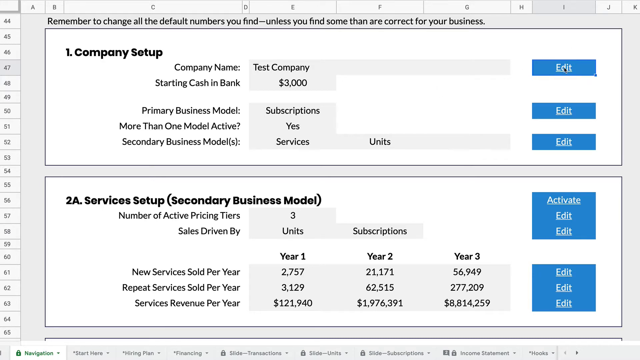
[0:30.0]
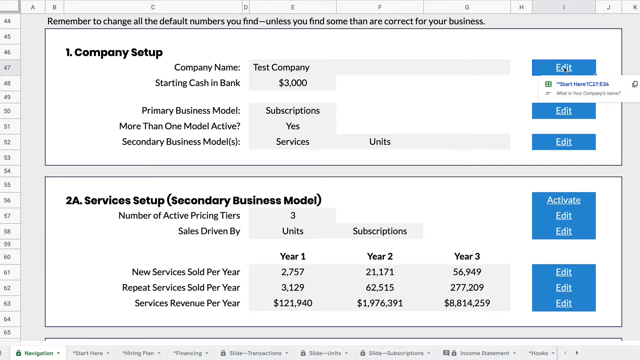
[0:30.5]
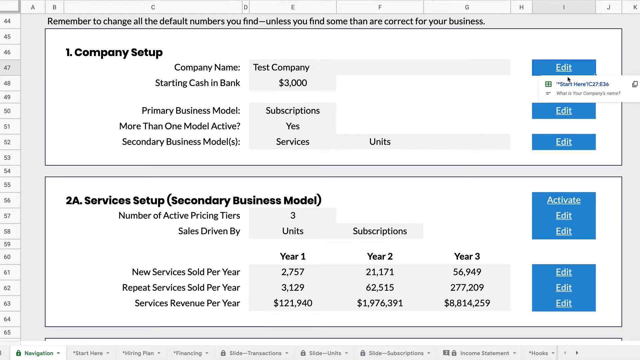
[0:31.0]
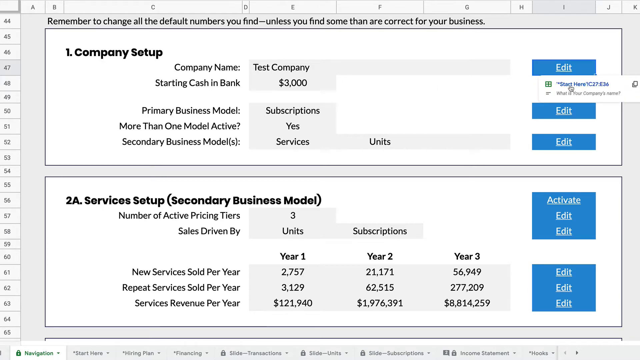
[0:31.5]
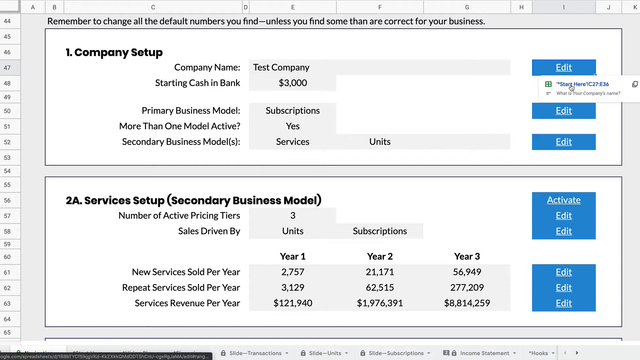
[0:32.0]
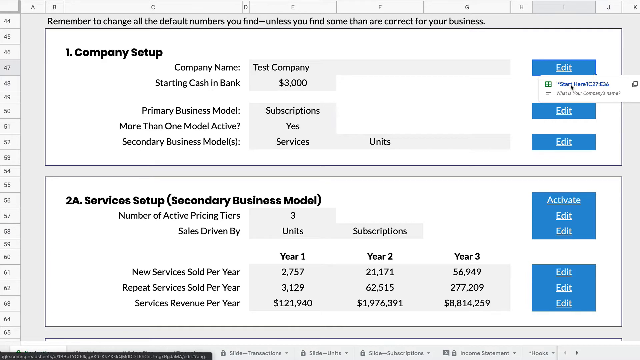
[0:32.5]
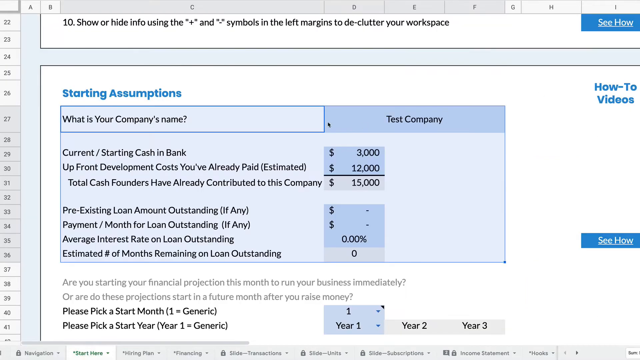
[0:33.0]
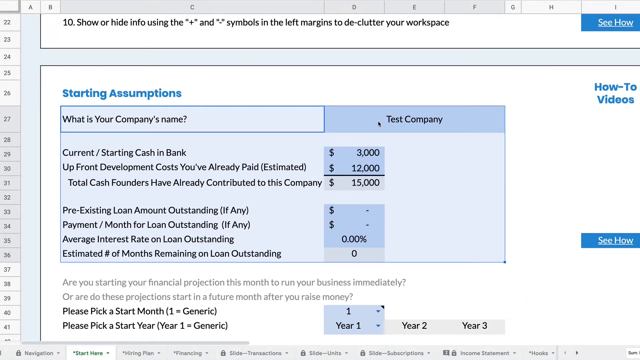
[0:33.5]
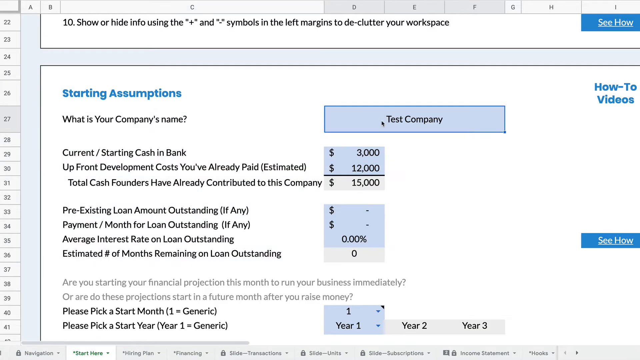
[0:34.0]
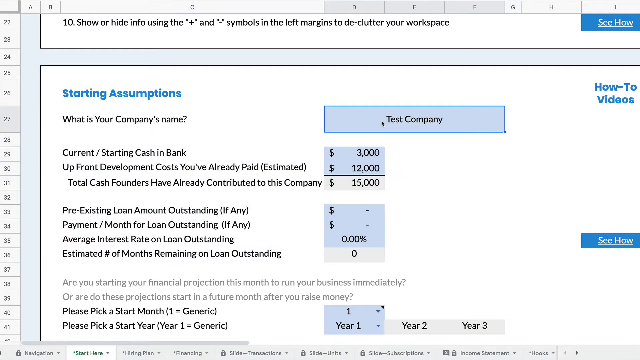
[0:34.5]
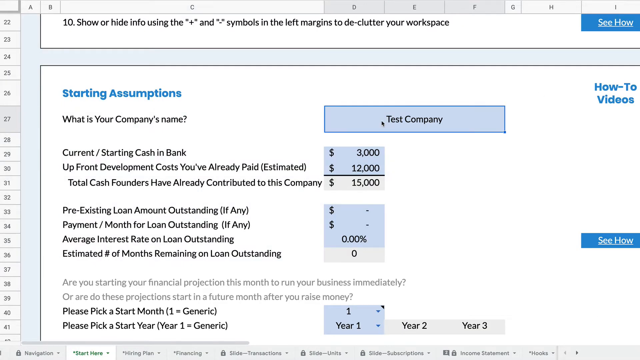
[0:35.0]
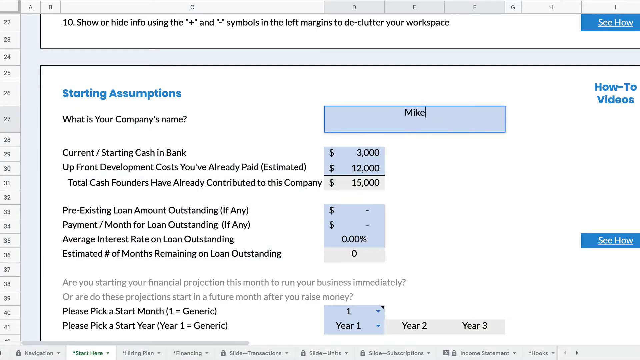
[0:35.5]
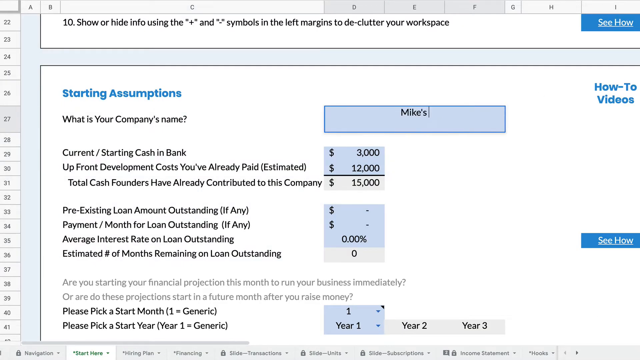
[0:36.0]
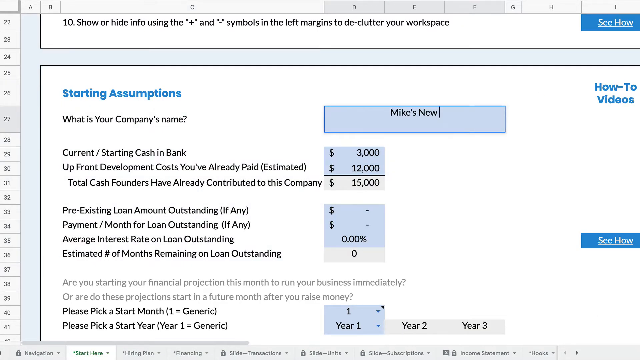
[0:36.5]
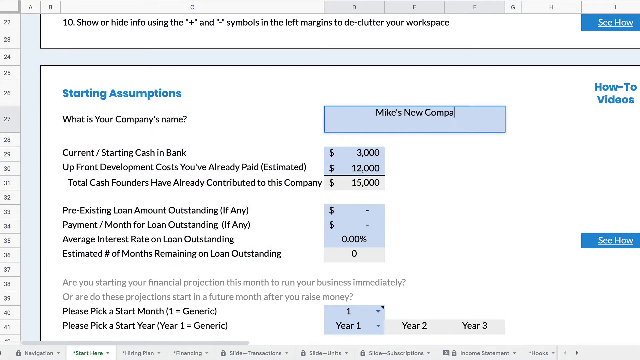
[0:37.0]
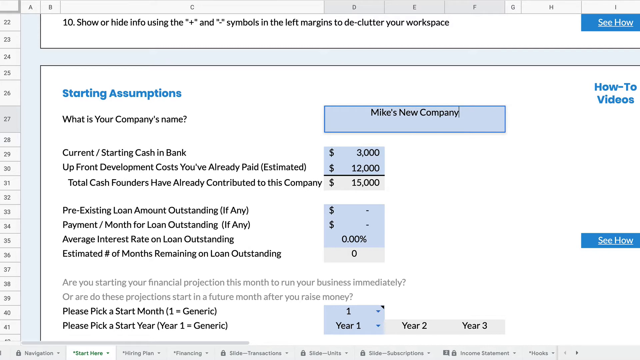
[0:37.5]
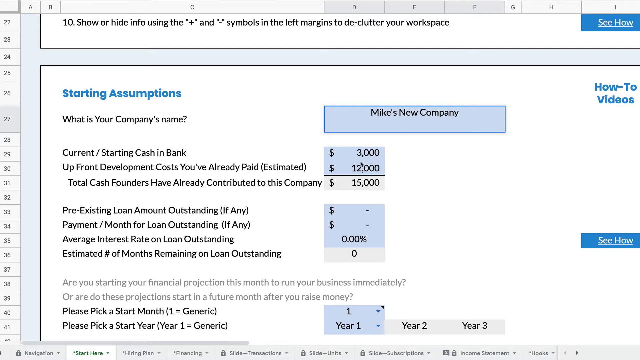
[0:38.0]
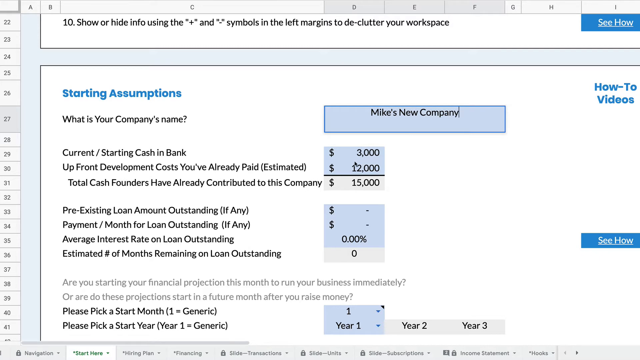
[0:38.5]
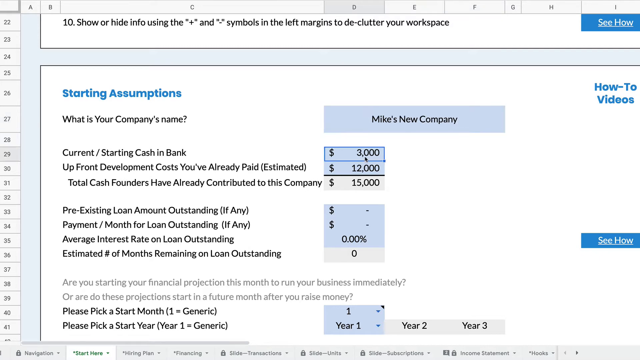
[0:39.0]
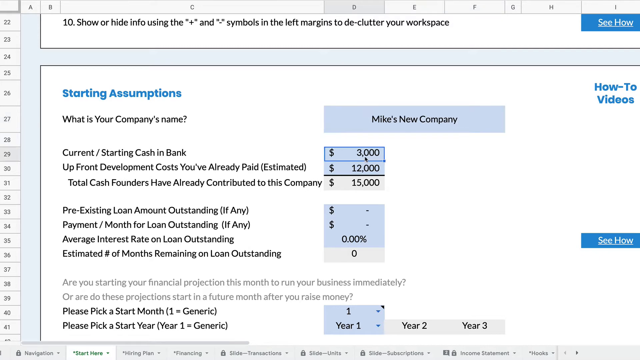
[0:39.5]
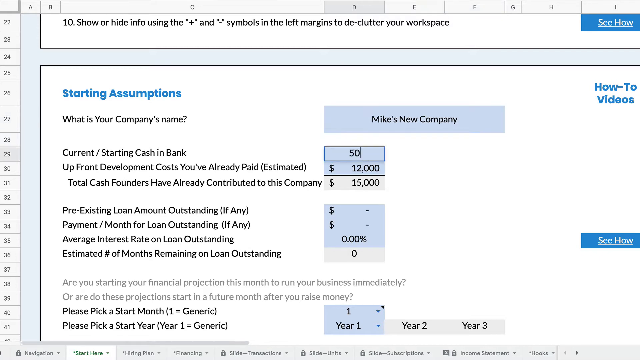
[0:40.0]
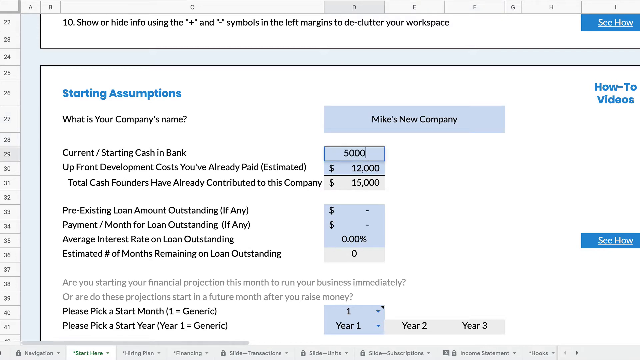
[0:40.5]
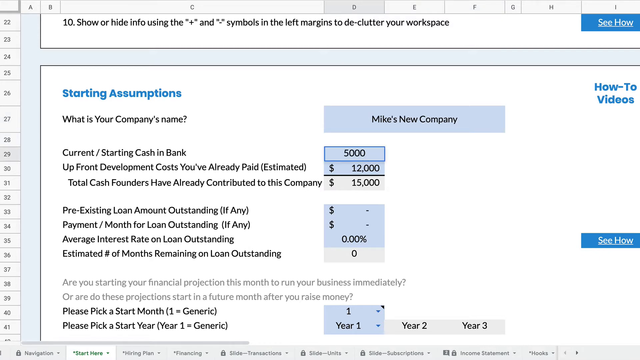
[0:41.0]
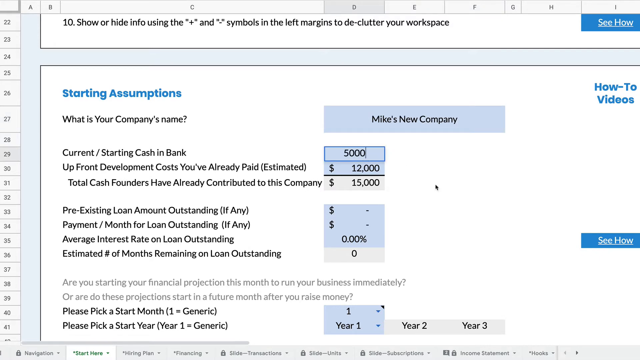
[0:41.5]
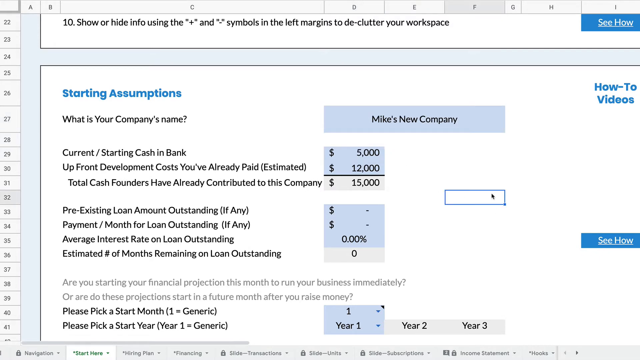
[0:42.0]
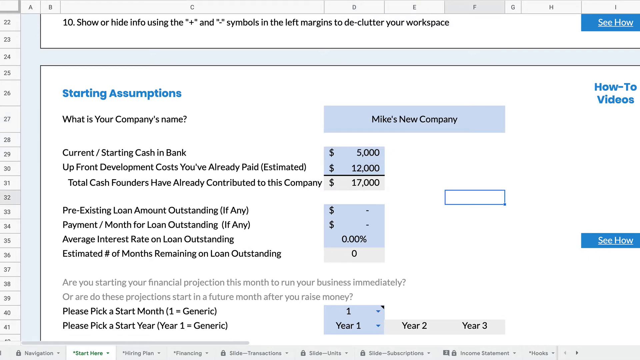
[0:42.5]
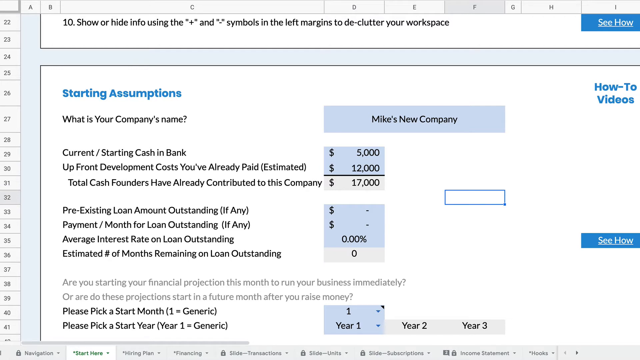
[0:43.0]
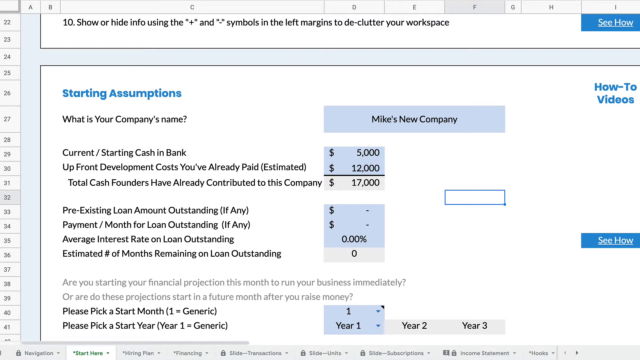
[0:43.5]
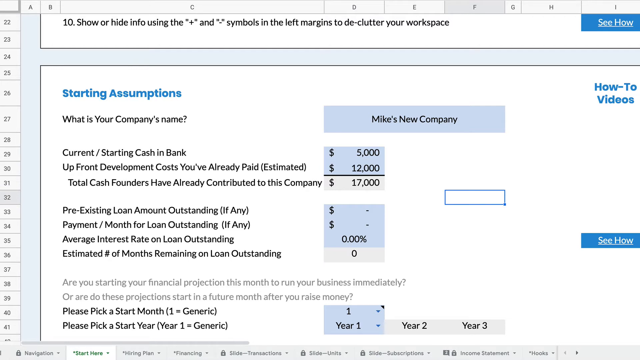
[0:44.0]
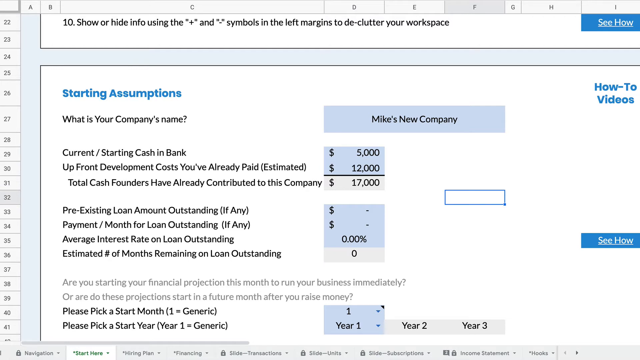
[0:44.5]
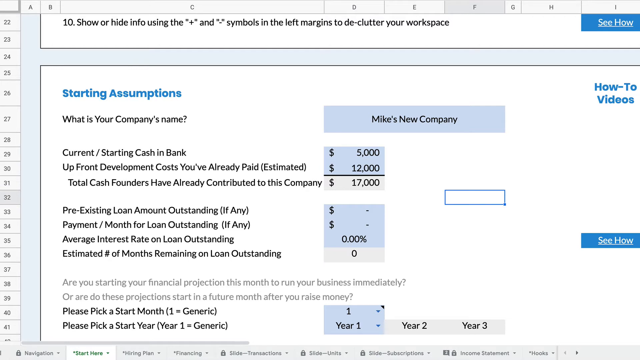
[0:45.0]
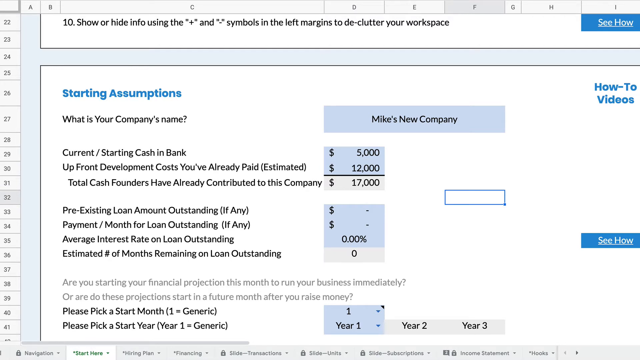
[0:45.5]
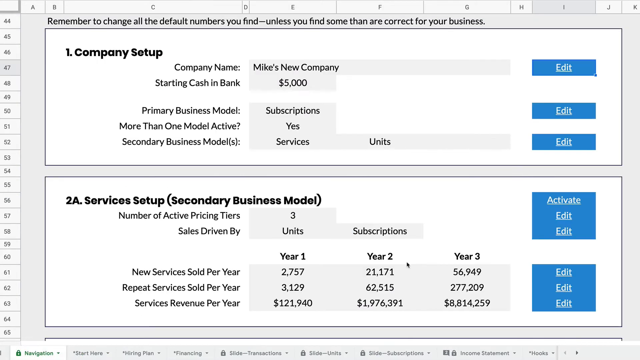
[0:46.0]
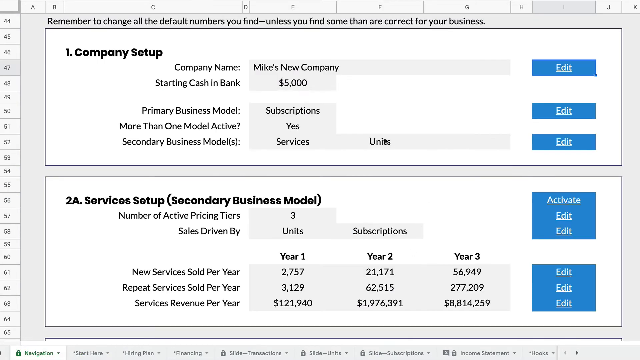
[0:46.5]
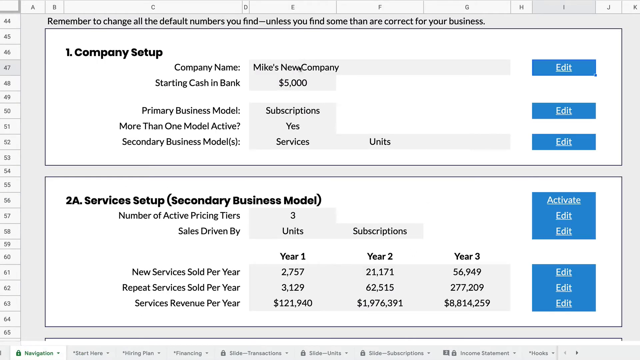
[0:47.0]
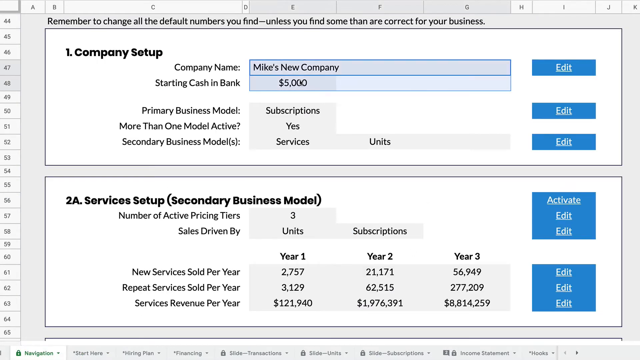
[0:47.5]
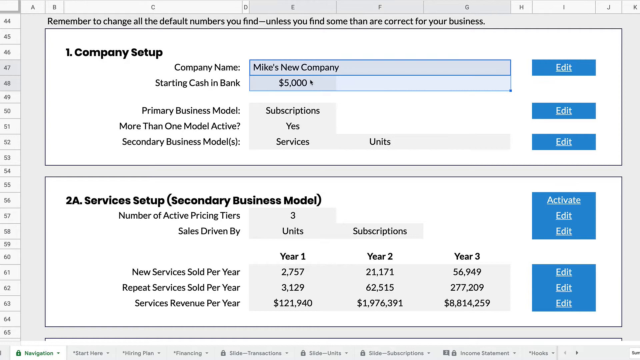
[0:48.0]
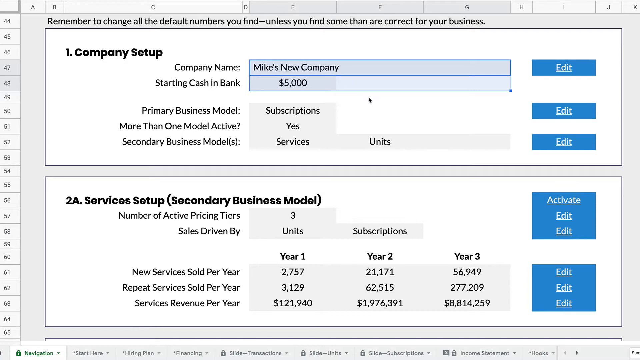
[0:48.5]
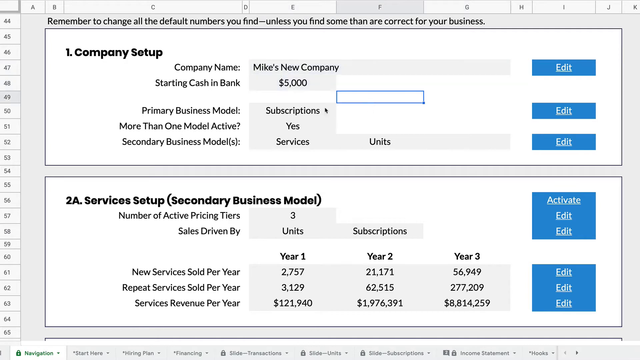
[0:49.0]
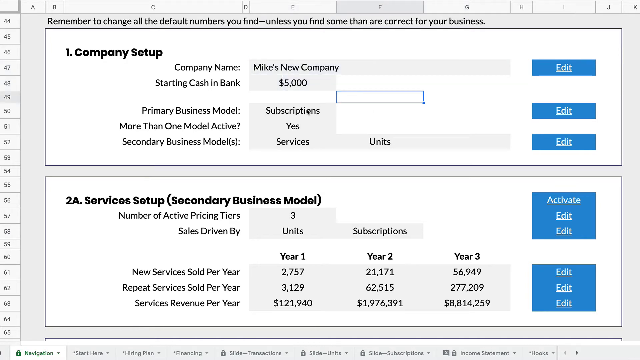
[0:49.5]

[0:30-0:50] The view moves to a different page reading "Starting Assumption" and "what is your company name?" The man types in "Mike's new company." The current starting cash in bank begins at 3,000, with upfront development costs already paid estimated at 12,000. He edits the starting cash from 3,000 to 5,000, which updates the total cash founders have already contributed to this company to 17,000. He clicks on another cell and highlights subscriptions, changing some of the parameters on the page. On the side there appear to be how-to videos and more information. Very pale gray text asks "Are you starting your financial project this month to run your business immediately or do these projects start in the future months after you raise money?" Options follow to pick a start month and pick a start year.